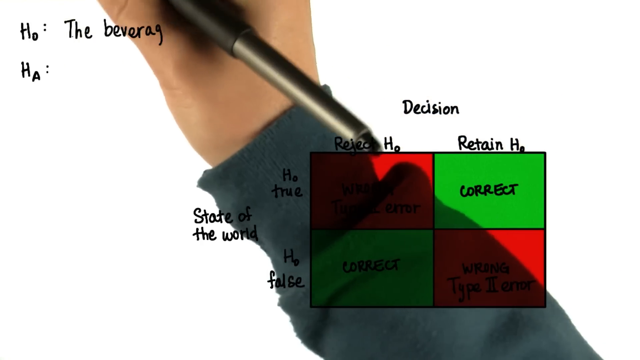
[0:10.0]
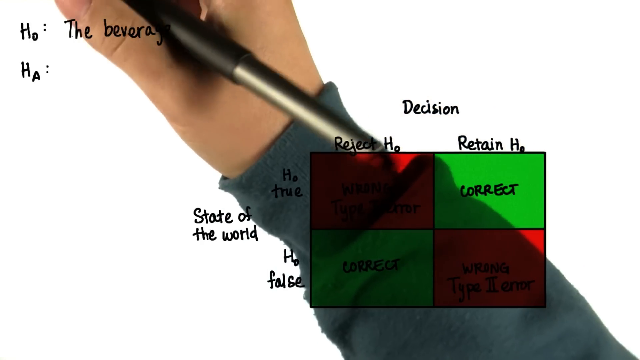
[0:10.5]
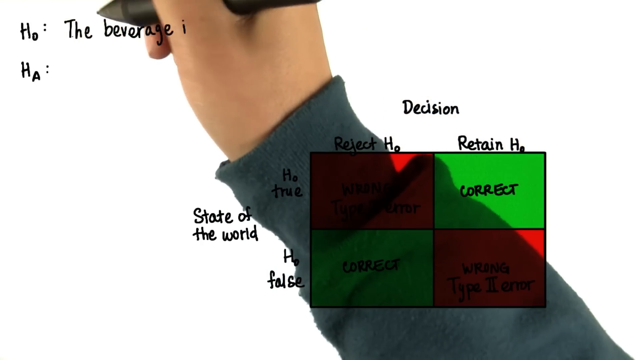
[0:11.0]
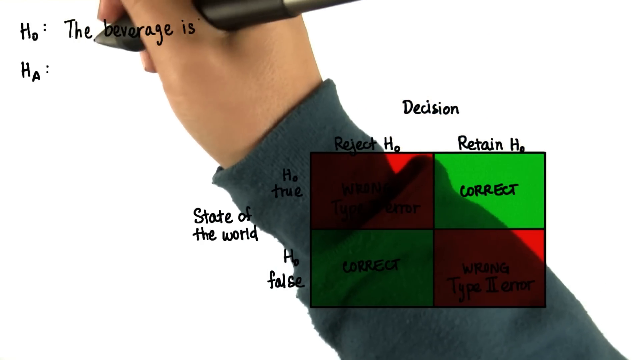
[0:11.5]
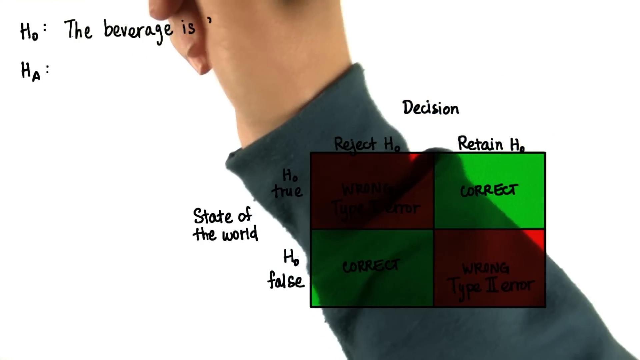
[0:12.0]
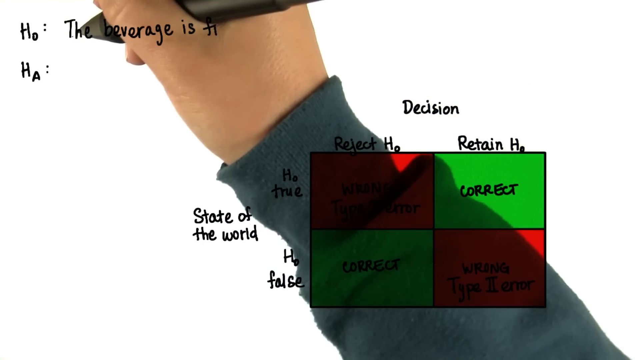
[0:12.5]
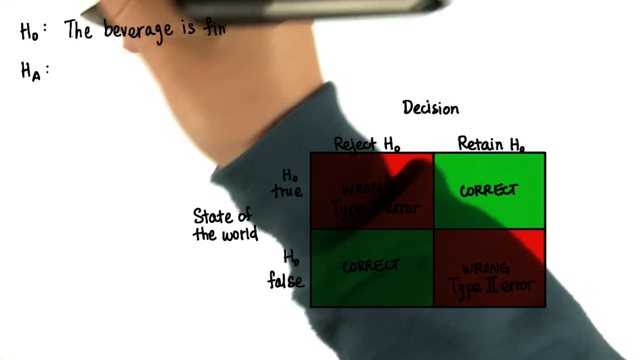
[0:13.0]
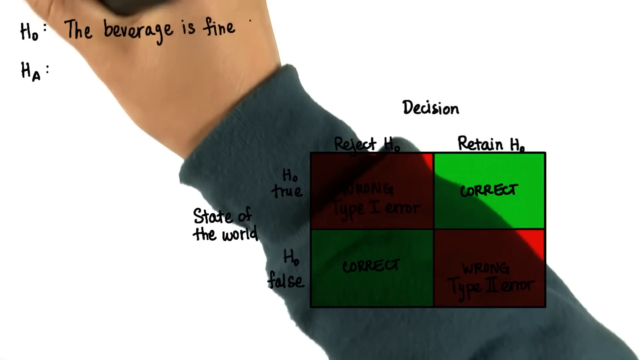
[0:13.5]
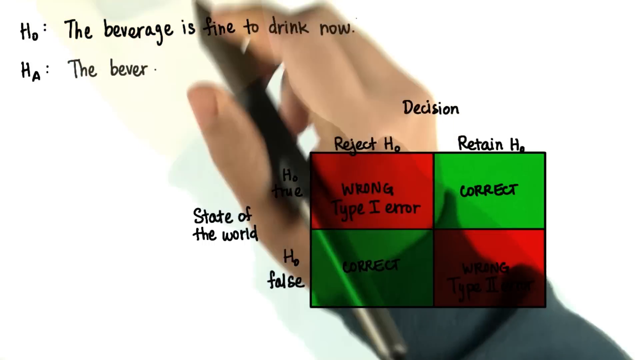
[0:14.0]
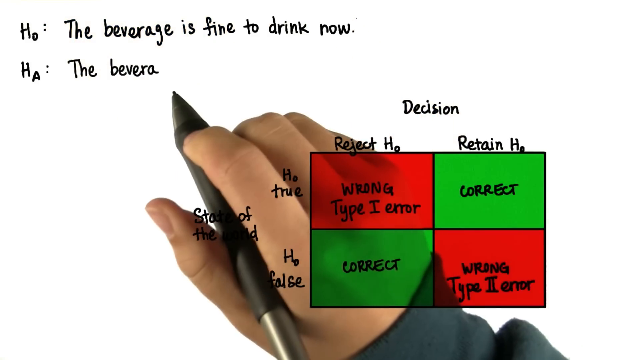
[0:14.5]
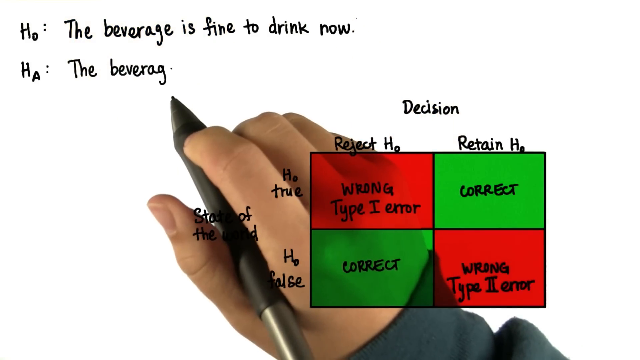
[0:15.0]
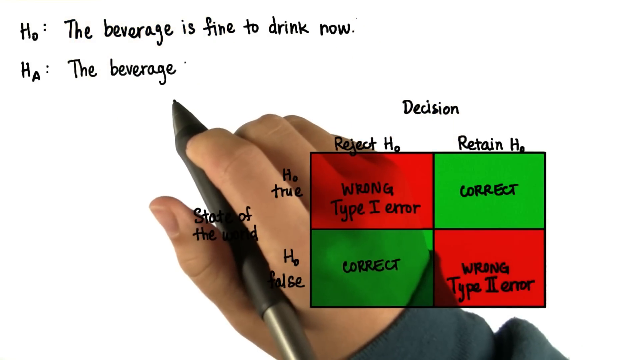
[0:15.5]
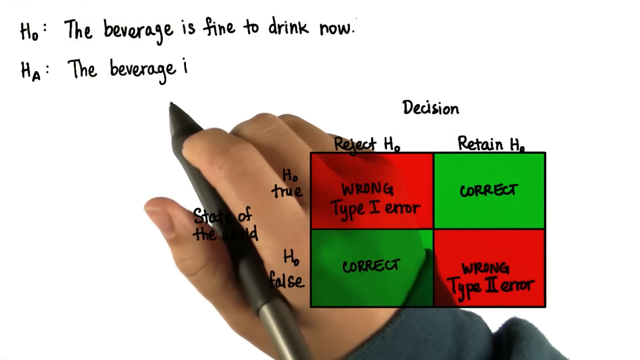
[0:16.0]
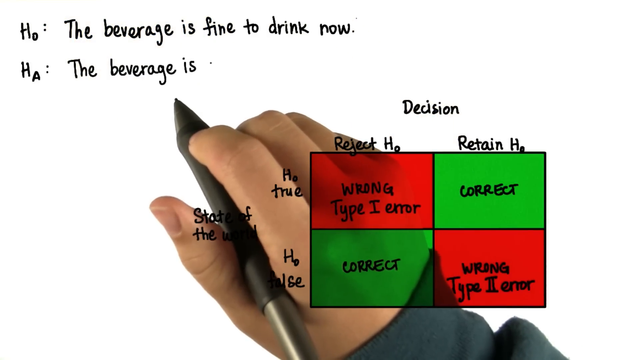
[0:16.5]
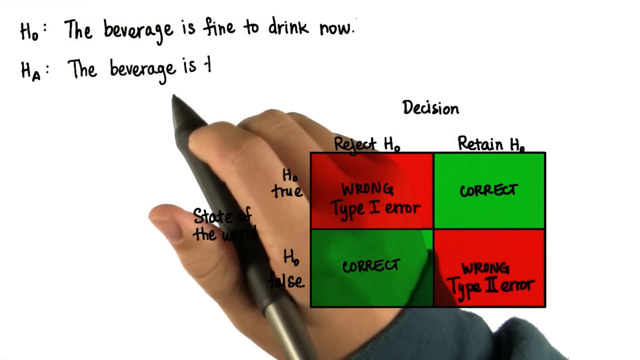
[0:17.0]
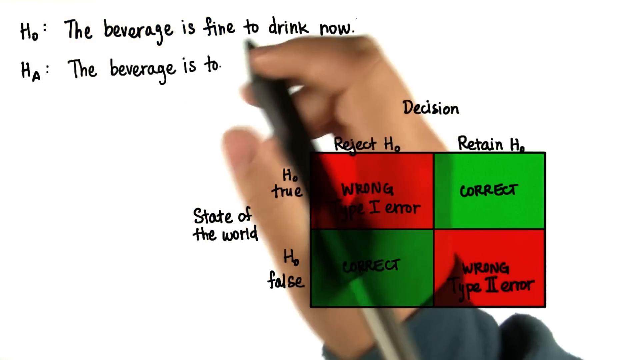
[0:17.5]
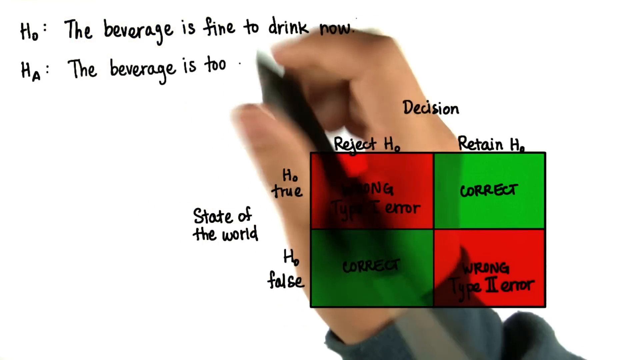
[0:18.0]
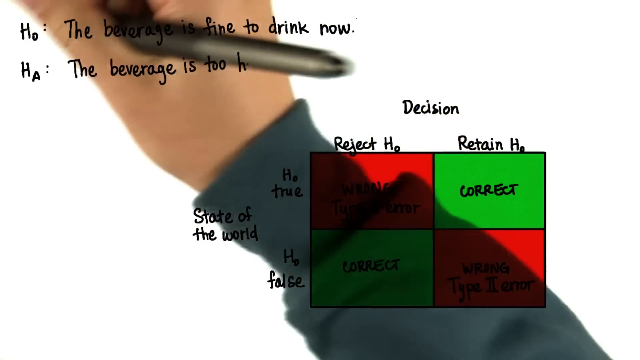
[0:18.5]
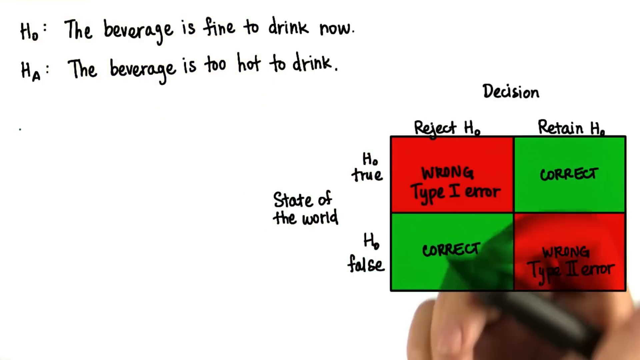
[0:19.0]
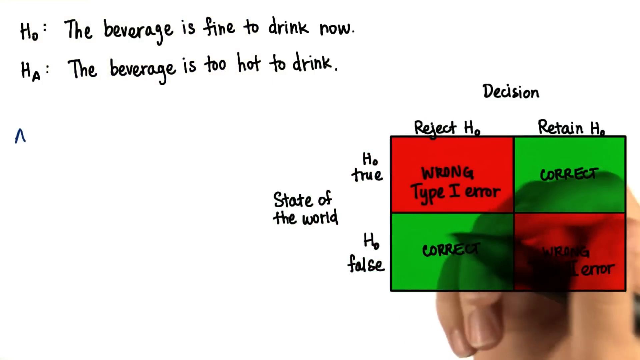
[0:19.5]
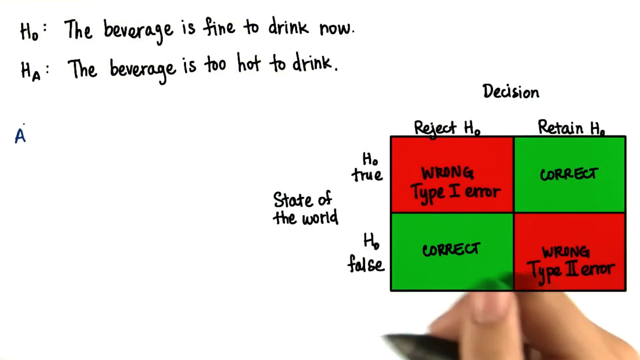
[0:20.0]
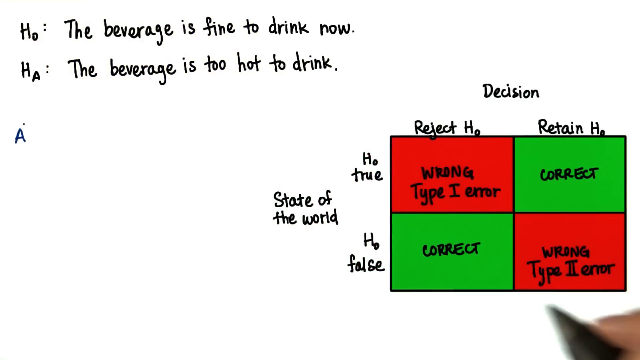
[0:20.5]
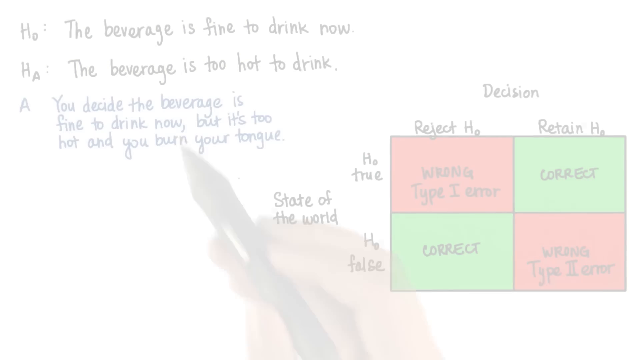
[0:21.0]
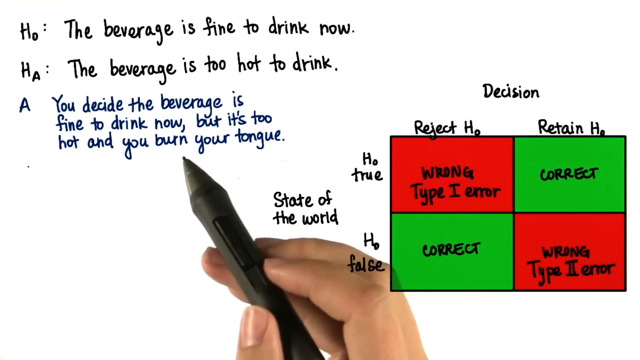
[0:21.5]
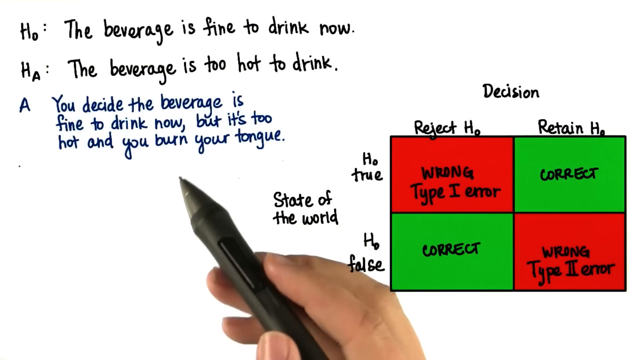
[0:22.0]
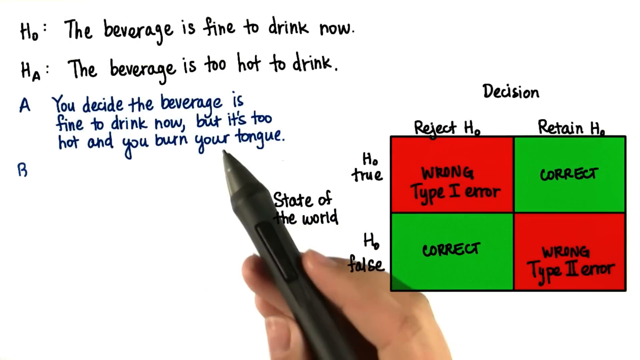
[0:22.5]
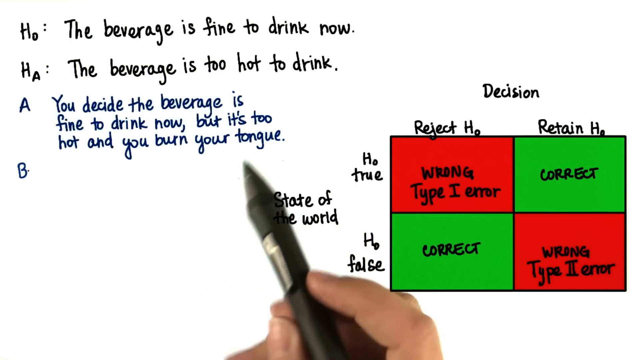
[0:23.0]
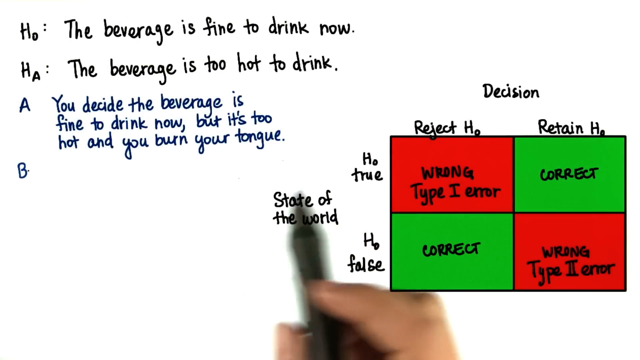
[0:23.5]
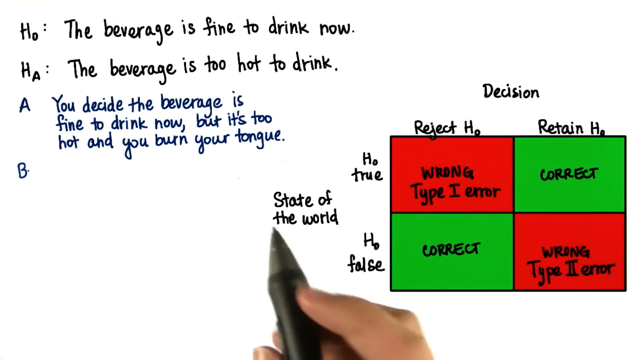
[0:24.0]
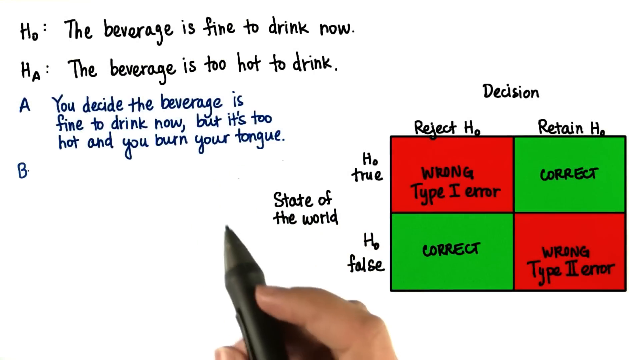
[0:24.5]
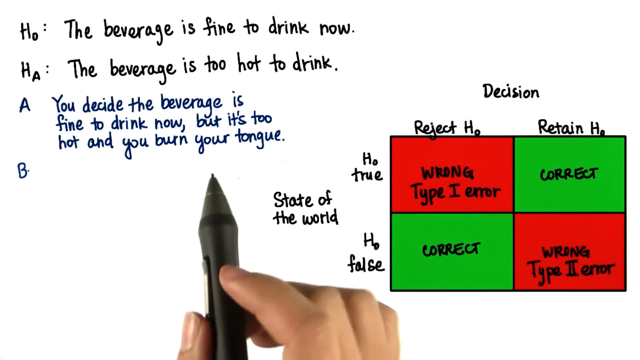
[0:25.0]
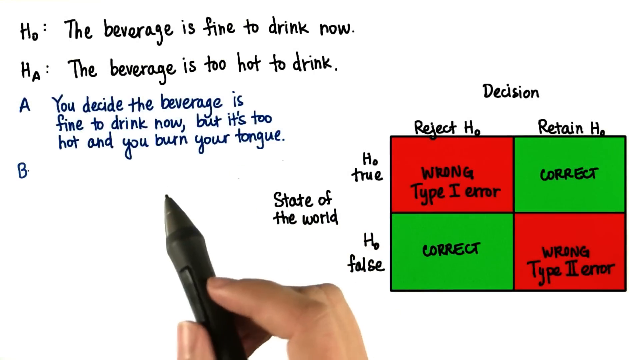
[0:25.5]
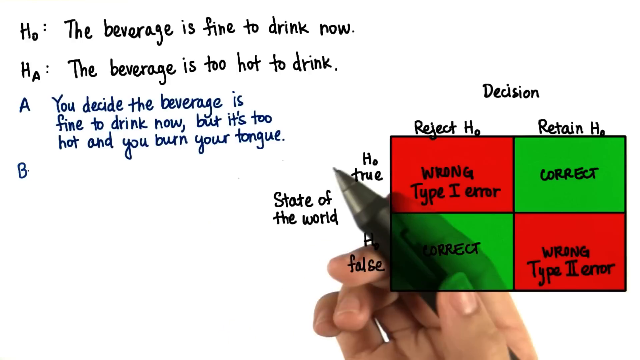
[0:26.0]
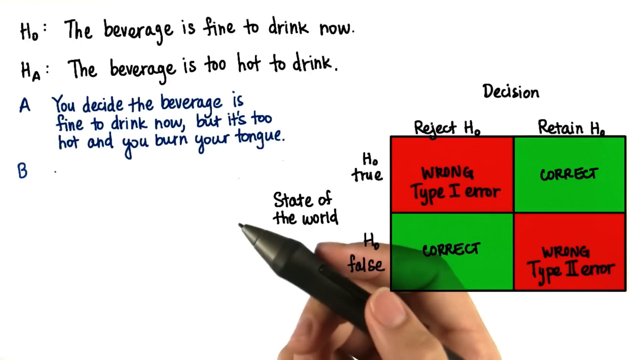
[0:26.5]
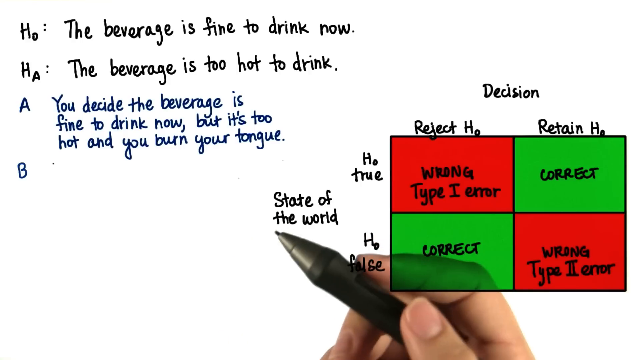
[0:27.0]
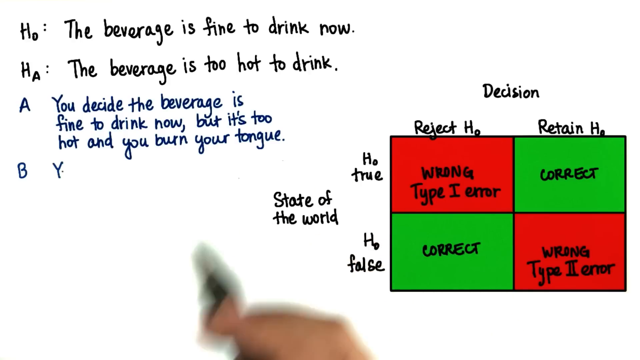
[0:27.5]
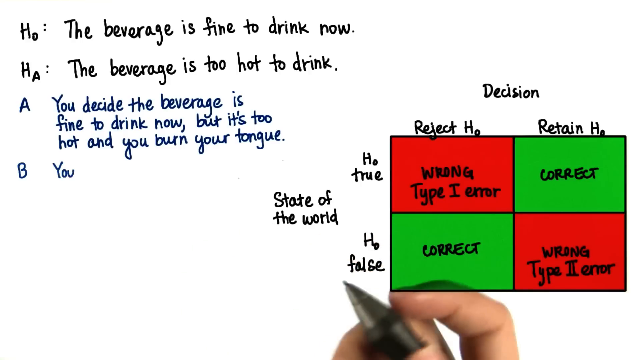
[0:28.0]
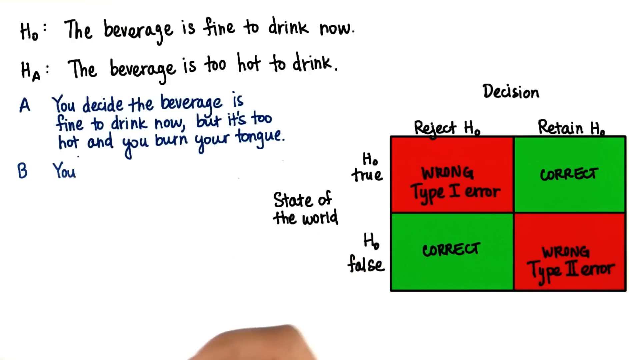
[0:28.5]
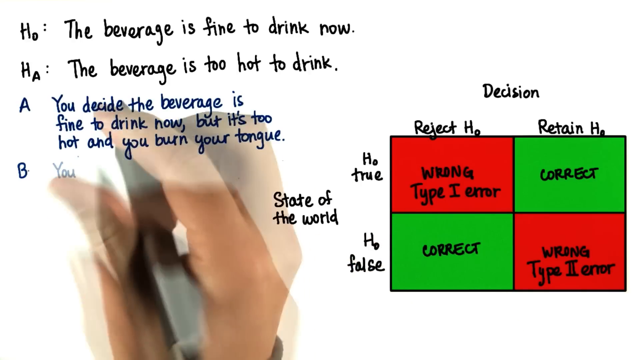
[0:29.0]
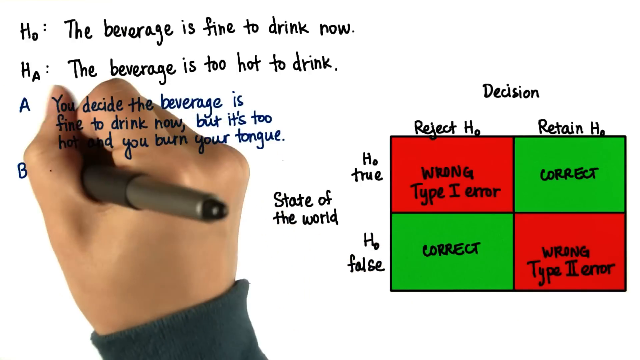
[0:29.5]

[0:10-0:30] The arm stretches from the bottom right-hand corner of the screen all the way to the top left corner. The person begins writing next to the word "Ho" in the top left-hand corner: "the beverage is fine to drink now". Next to the already written word "Ha", on the right-hand side, they write "the beverage is too hot to drink". These lines are in black. Skipping a line below, they write the letter "A" and, to its right, "you decide the beverage is fine to drink now but it's too hot and you burn your tongue" in blue. Below that, they write the letter "B" and start writing the word "you" in blue.